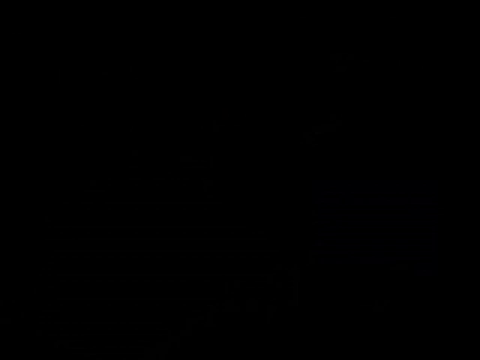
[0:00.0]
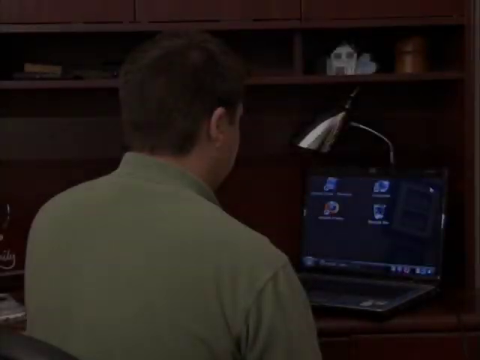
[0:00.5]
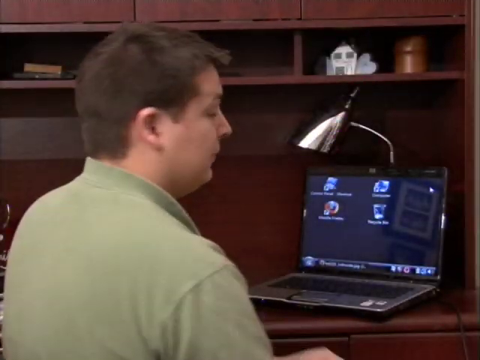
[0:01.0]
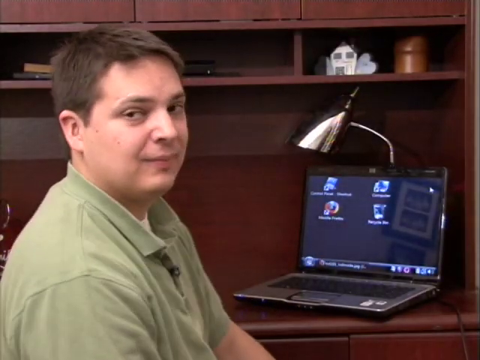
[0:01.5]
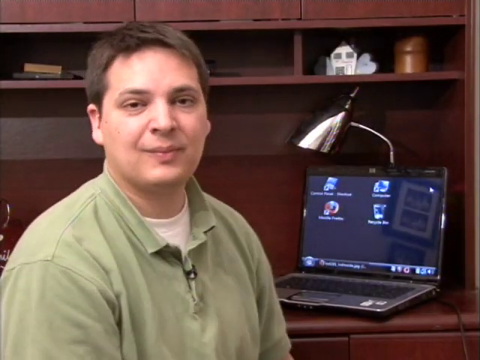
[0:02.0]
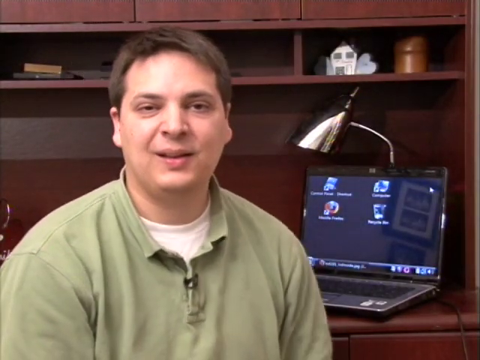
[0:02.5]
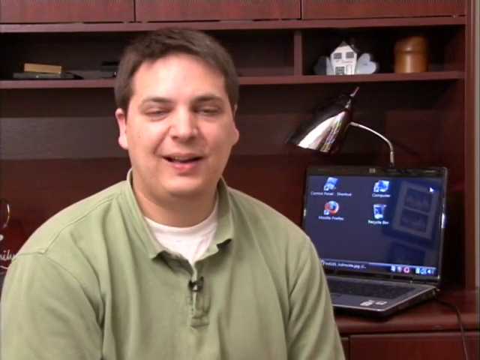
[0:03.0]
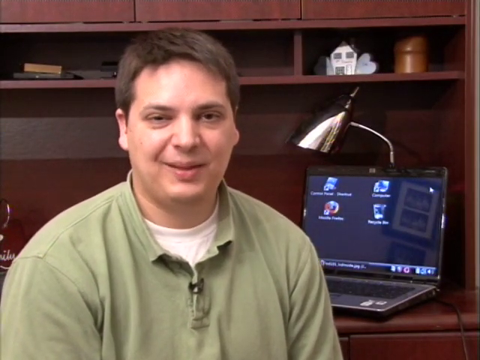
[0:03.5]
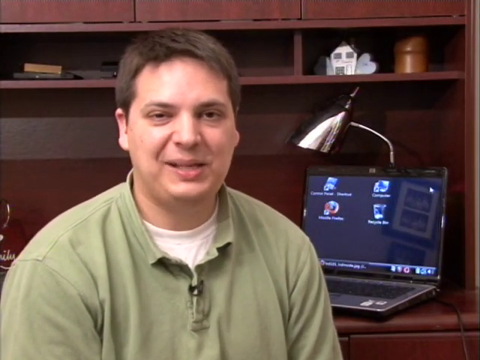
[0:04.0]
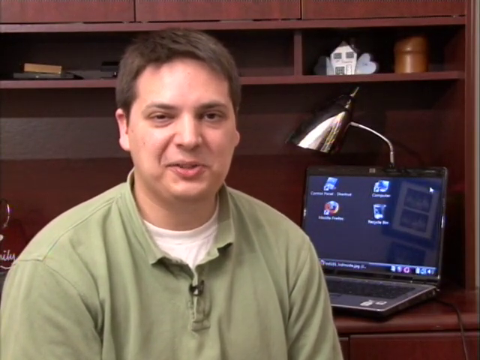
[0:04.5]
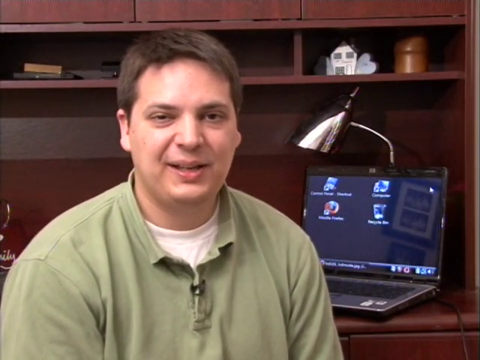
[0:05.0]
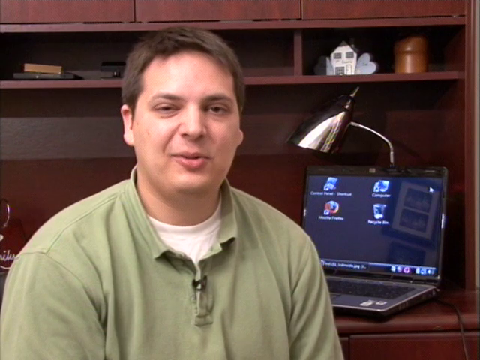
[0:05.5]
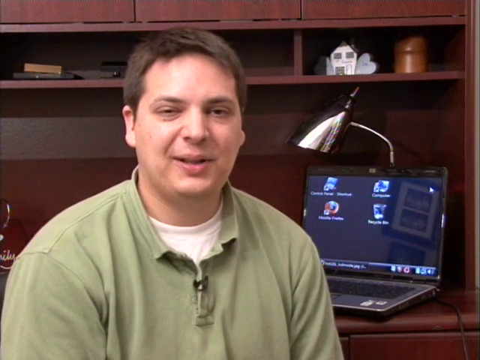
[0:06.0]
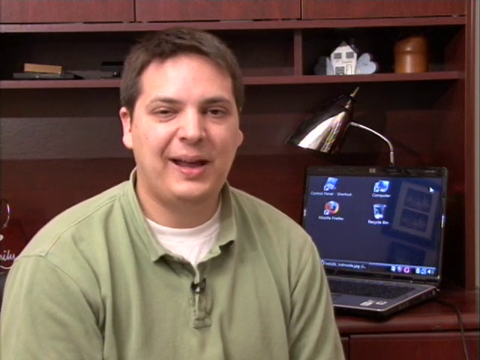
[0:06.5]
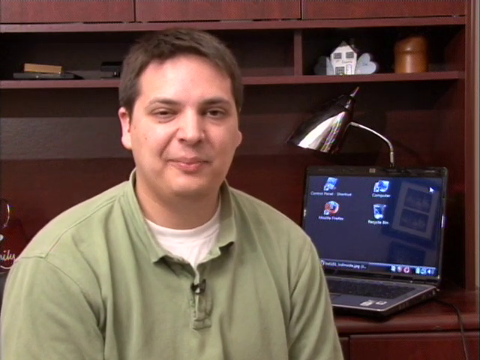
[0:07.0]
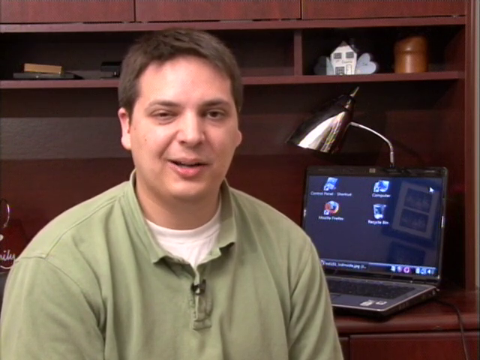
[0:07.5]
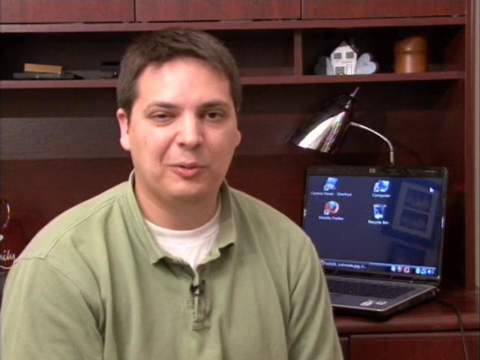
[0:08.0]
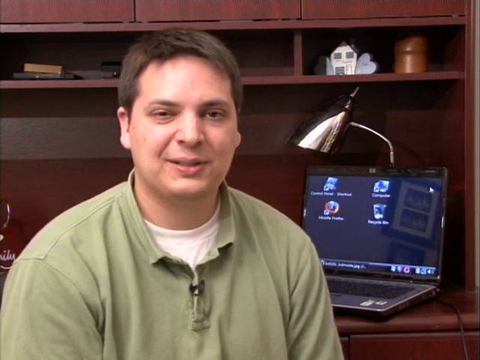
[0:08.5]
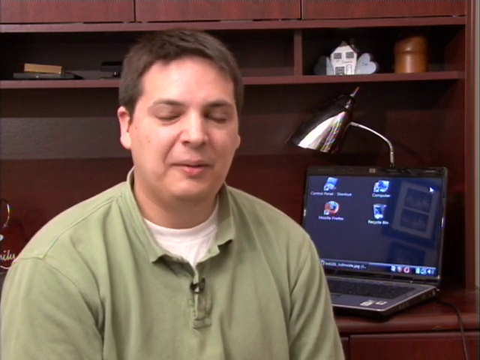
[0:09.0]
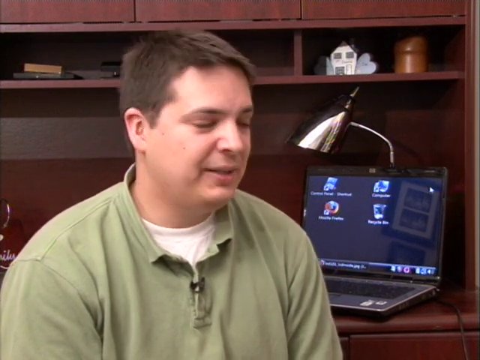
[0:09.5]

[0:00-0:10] The video begins with a man in a green collared t-shirt facing away from the camera toward a laptop that is turned on; he is sitting at what looks like a wooden desk. He turns toward the camera and faces it, revealing a white shirt underneath the green shirt, and shows a subtle smile. Looking directly at the camera, he appears to be talking to it. After he finishes speaking, he looks down toward the laptop and looks like he is about to turn back.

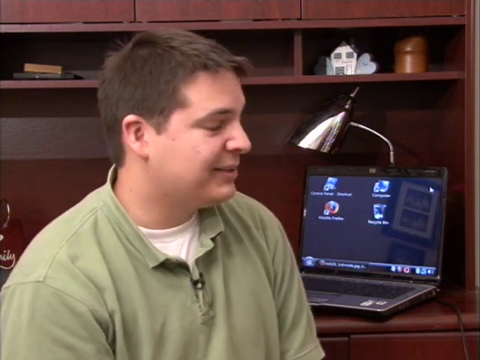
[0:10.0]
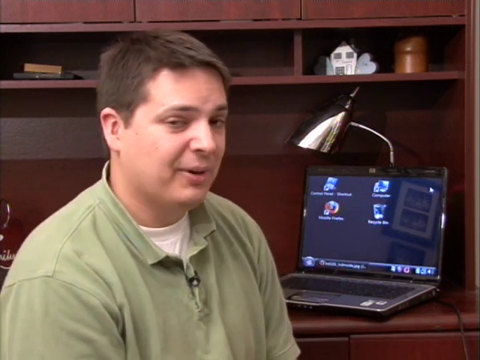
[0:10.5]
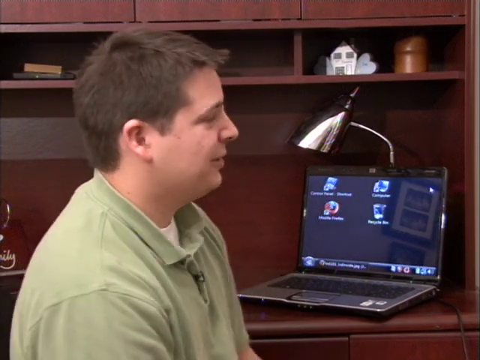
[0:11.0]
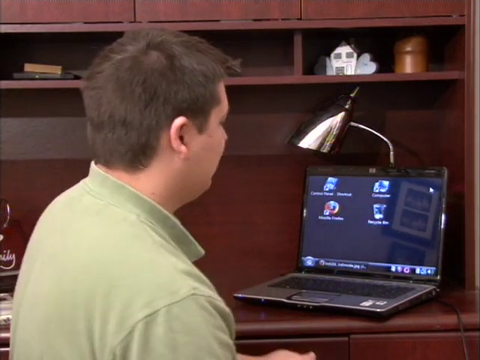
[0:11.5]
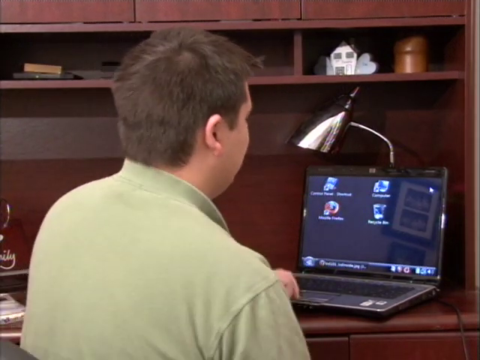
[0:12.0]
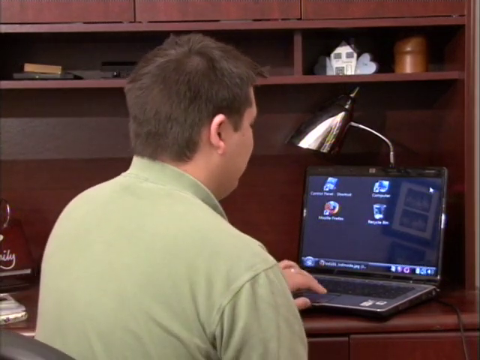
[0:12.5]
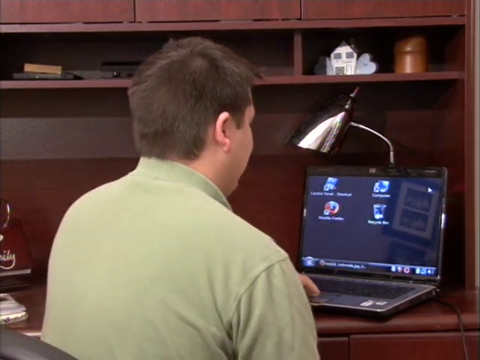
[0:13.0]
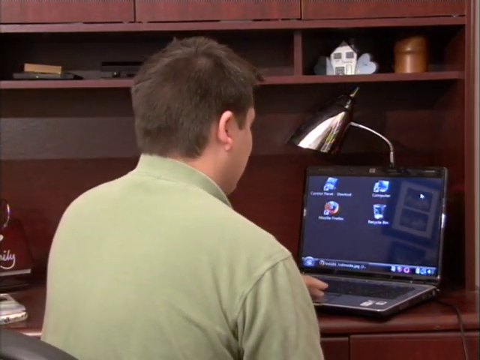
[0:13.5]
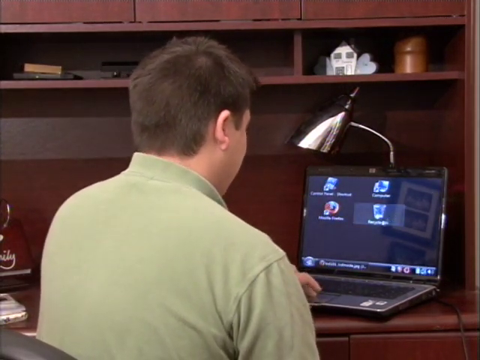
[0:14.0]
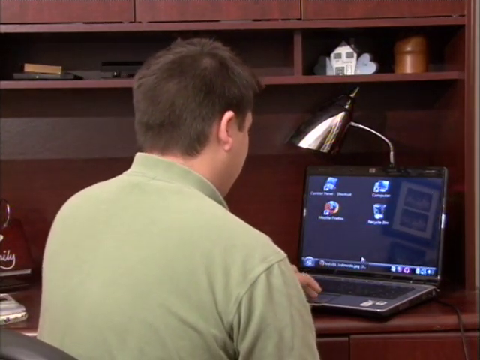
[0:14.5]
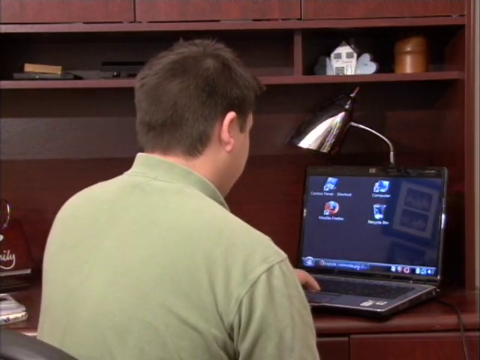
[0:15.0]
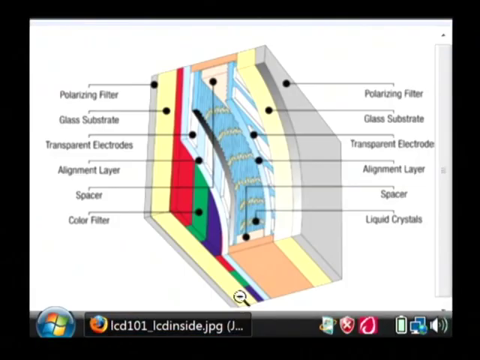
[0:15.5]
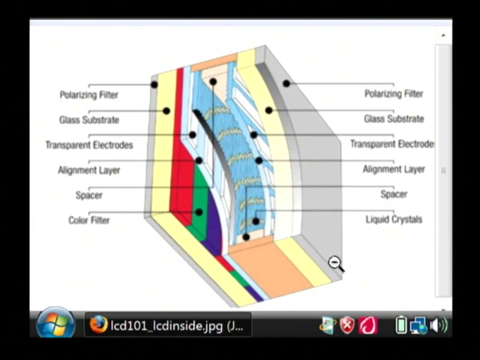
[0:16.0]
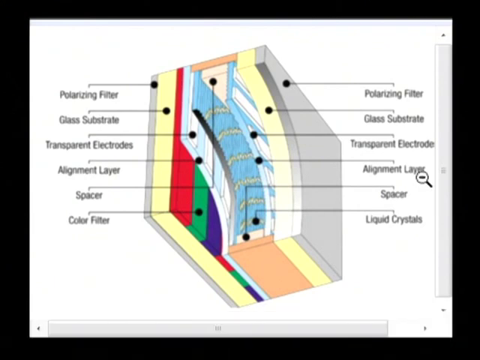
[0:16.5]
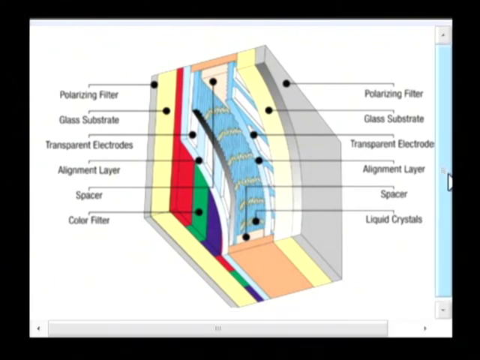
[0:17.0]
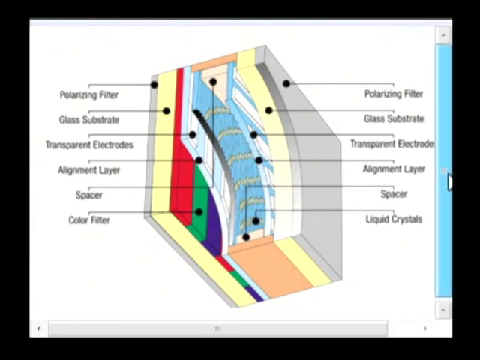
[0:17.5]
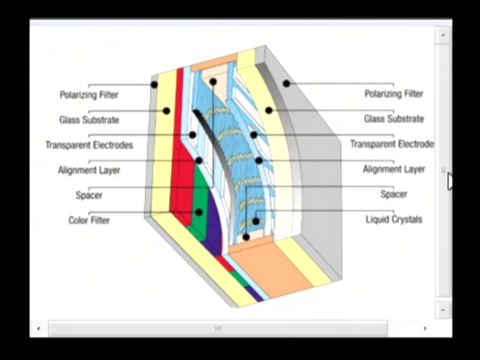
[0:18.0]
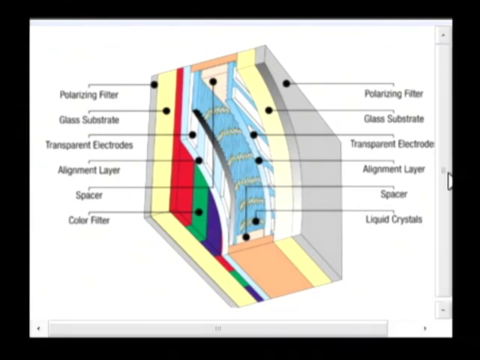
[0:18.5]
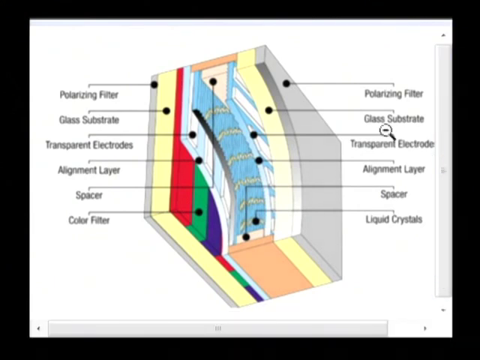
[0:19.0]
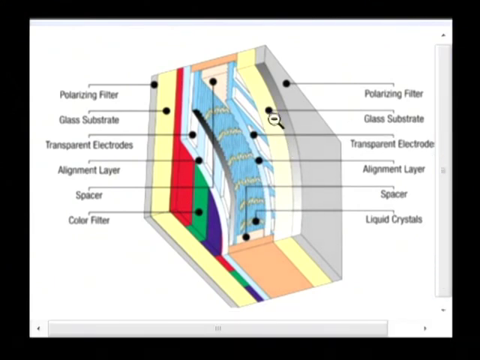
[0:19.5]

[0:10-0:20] The man turns back toward the laptop, raises his left hand to it and touches the trackpad, and the mouse cursor moves on the laptop screen as he scrolls. He clicks a tab at the bottom of the screen, and an image opens up, taking up the entire screen. The image is some sort of cross-sectional diagram with labels pointing to the different parts; it is unclear what it shows. He moves the cursor to the scroll bar on the right side of the screen and appears to click it for a moment, and then the cursor is shown as a zoom-out magnifying icon, apparently as he tries to zoom out of the image.